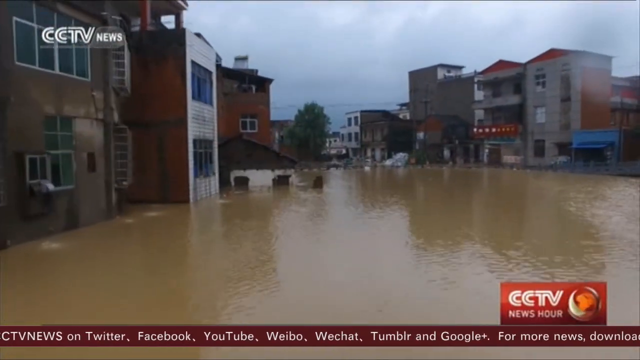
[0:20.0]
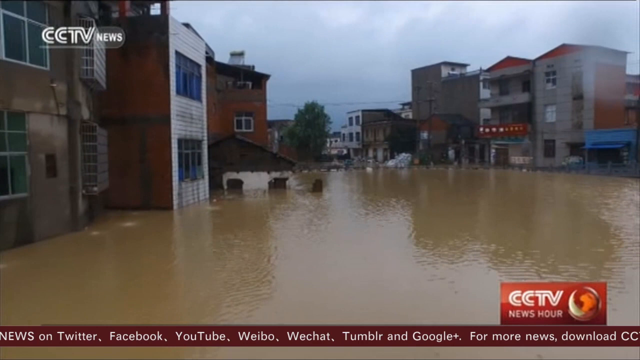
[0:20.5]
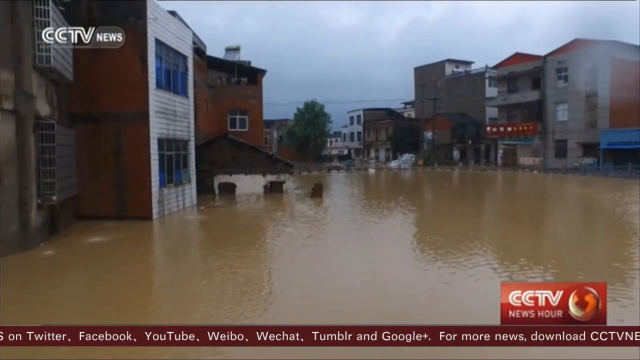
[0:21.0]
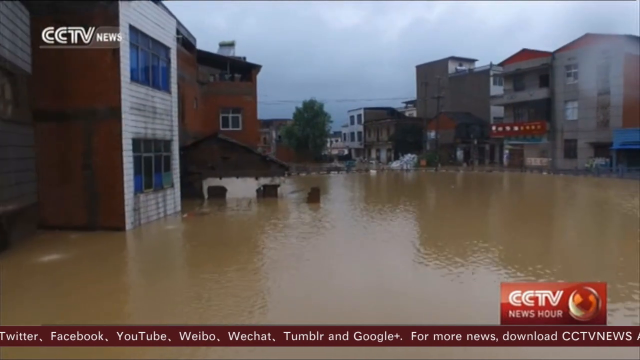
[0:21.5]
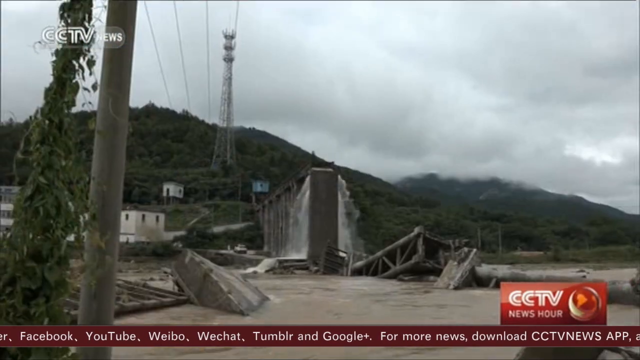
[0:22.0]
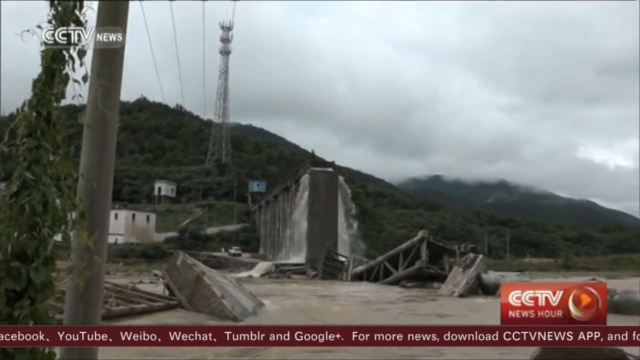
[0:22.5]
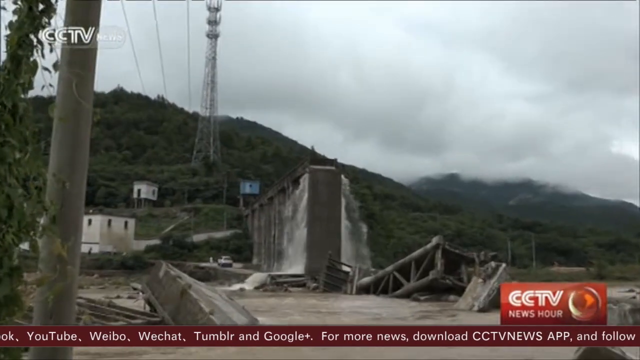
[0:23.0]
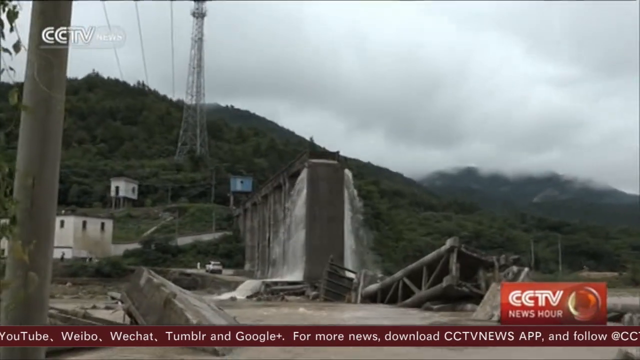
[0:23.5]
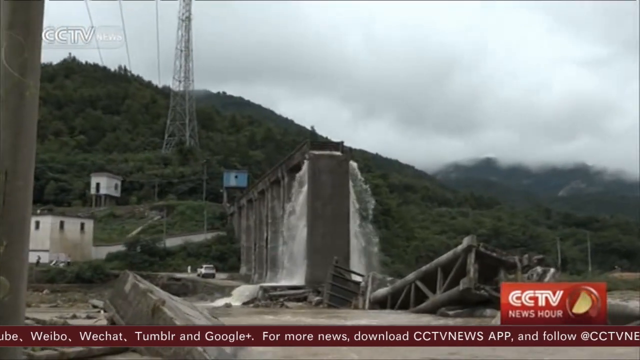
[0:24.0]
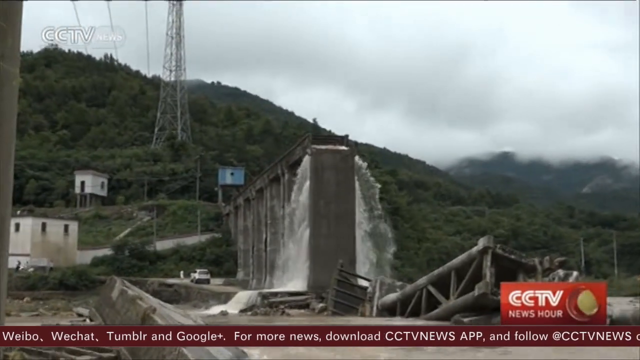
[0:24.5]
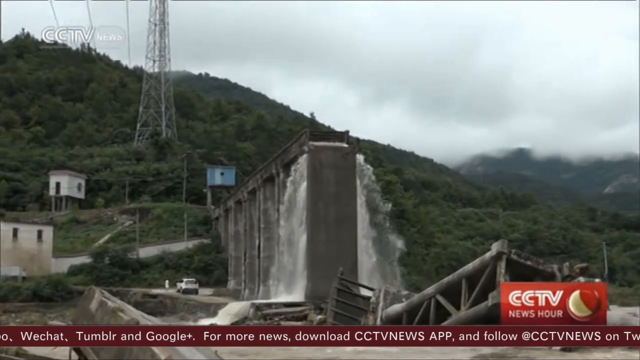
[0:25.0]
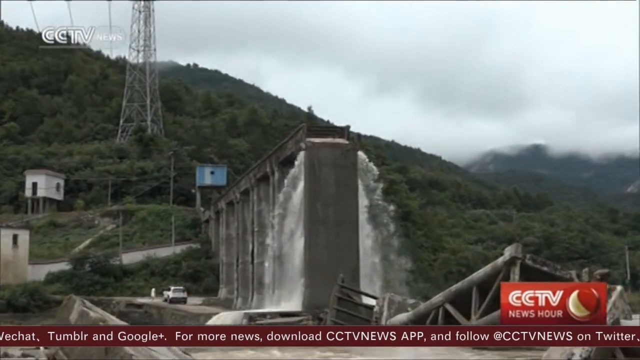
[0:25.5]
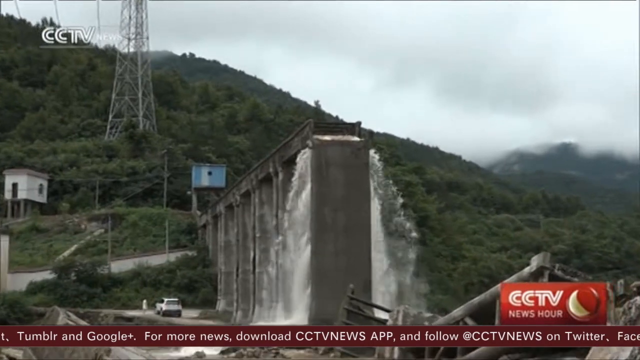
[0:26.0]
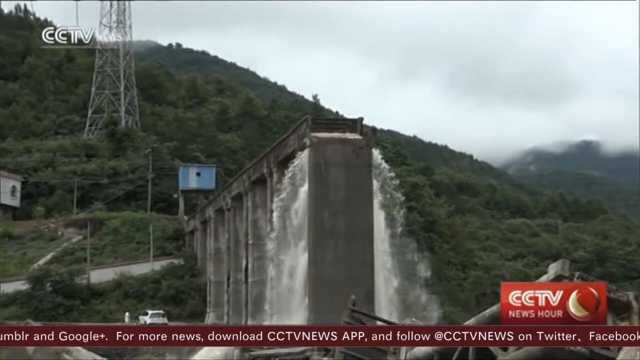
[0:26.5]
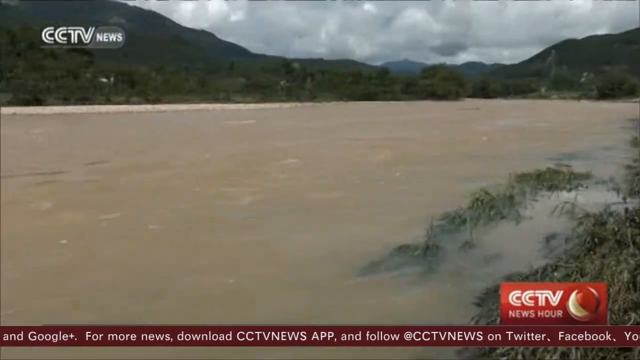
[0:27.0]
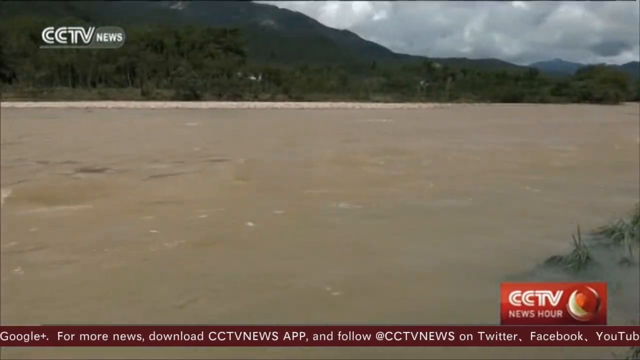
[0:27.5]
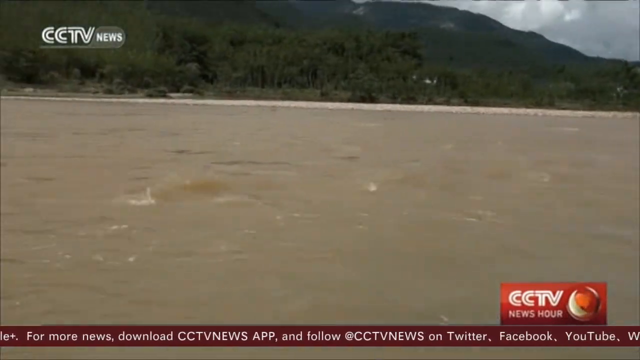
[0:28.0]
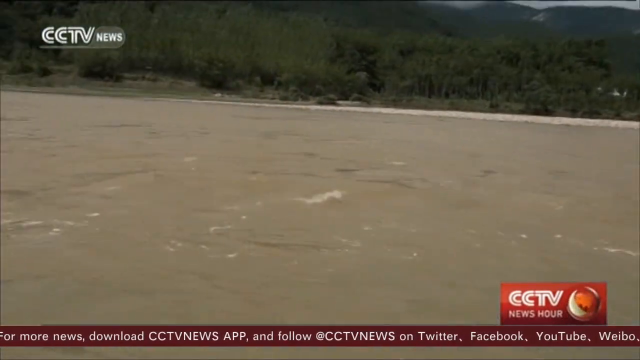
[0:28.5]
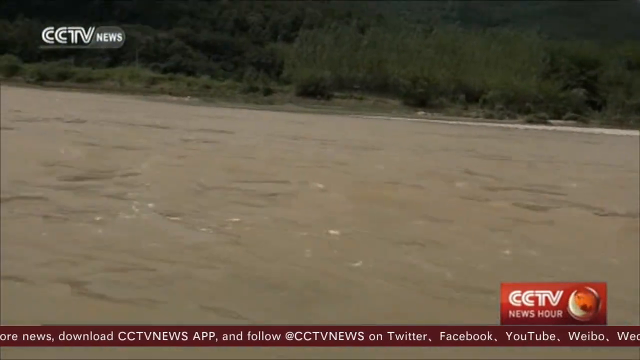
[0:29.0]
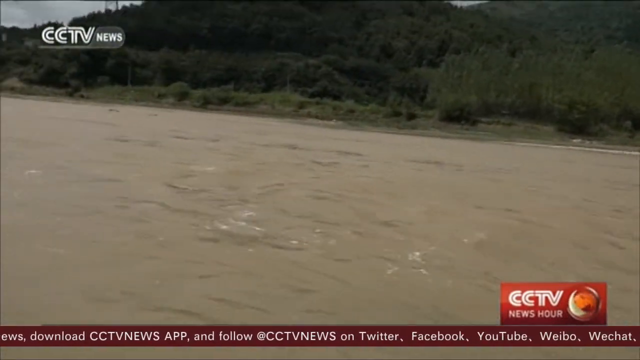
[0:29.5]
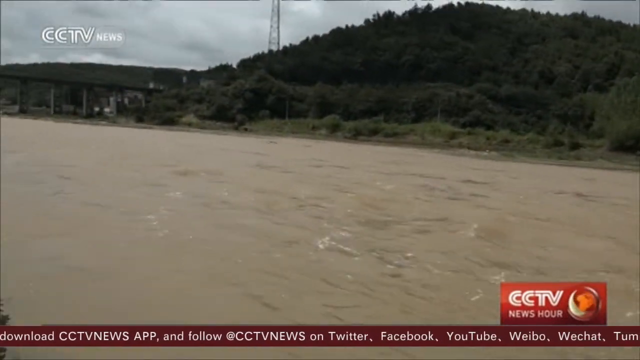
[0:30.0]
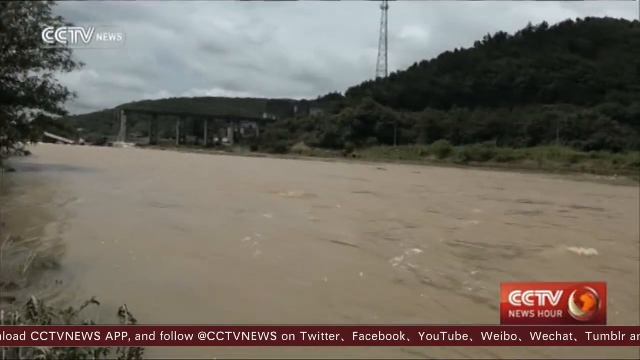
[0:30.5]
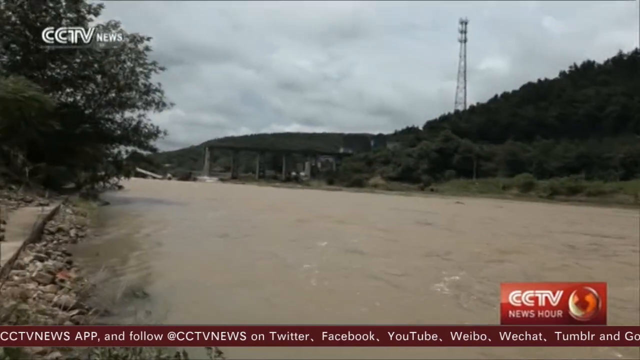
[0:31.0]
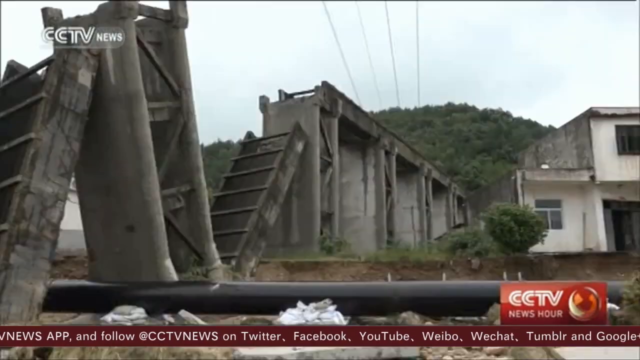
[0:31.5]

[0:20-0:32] The drone shot continues to fly down the flooded street, showing the scale of the flooding. The video cuts to a shot with mountains in the background and a large bridge or viaduct, out of which water flows extremely dramatically from a great height. Next is footage of hills in the background and what may have been a river or possibly a street, now filled with water. The camera pans from right to left to show the enormous extent of the flooding.